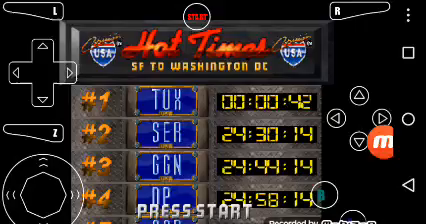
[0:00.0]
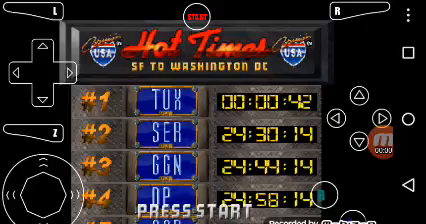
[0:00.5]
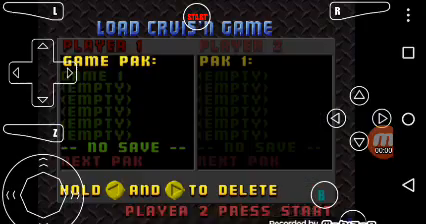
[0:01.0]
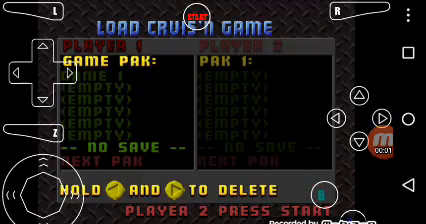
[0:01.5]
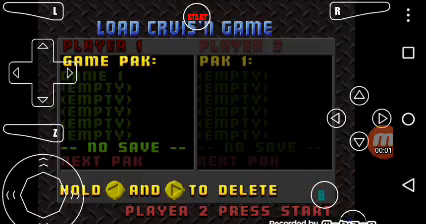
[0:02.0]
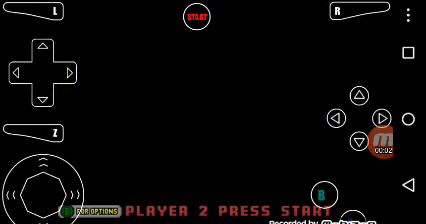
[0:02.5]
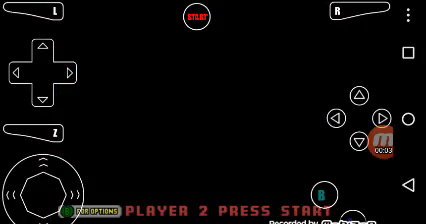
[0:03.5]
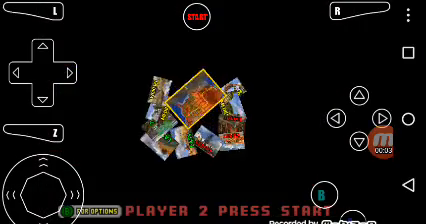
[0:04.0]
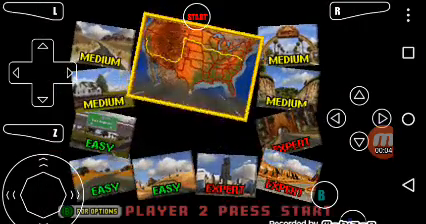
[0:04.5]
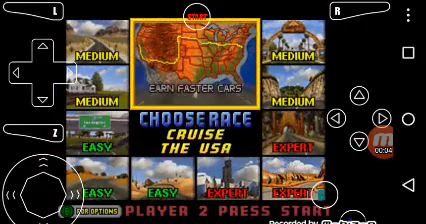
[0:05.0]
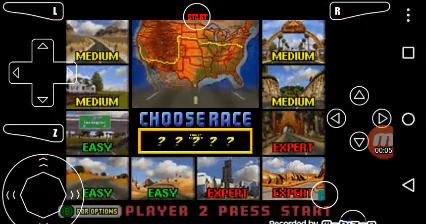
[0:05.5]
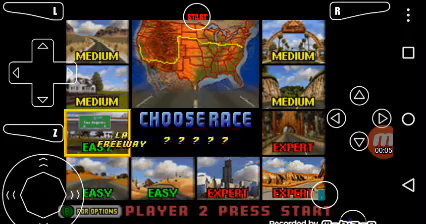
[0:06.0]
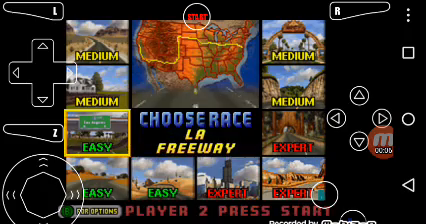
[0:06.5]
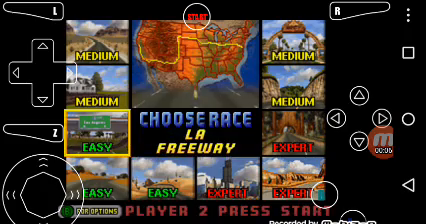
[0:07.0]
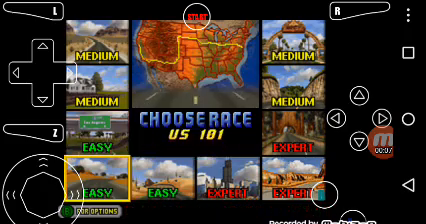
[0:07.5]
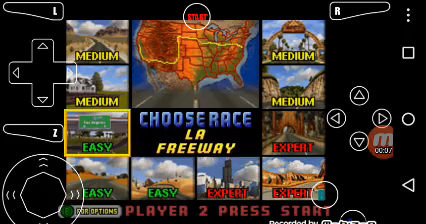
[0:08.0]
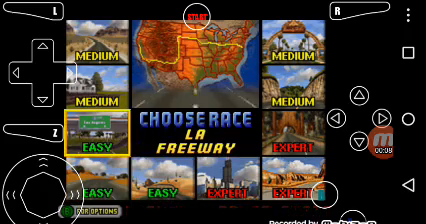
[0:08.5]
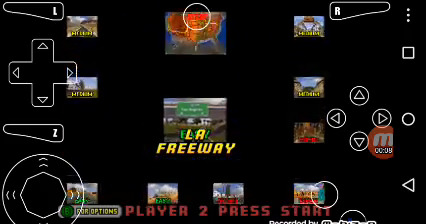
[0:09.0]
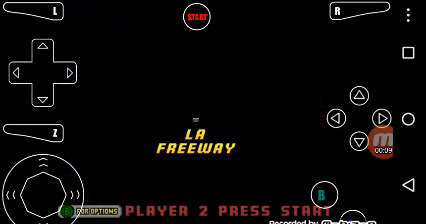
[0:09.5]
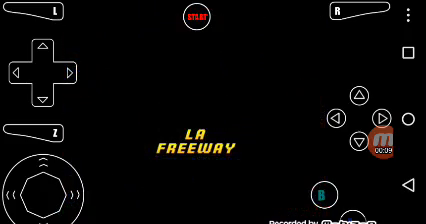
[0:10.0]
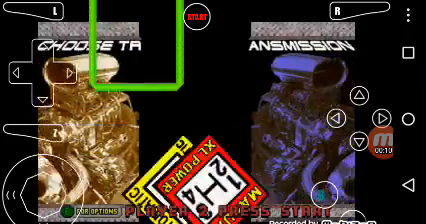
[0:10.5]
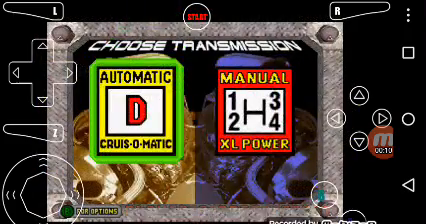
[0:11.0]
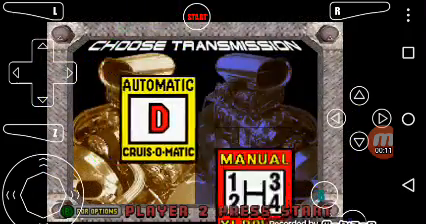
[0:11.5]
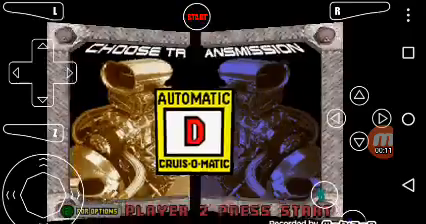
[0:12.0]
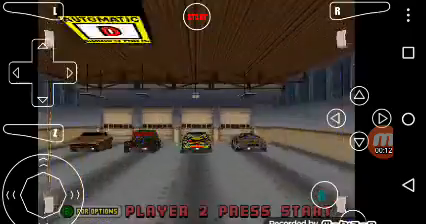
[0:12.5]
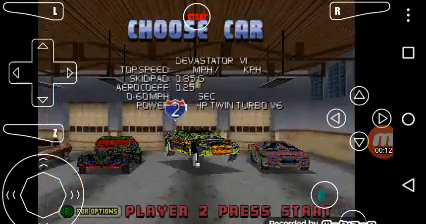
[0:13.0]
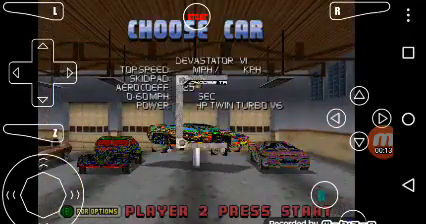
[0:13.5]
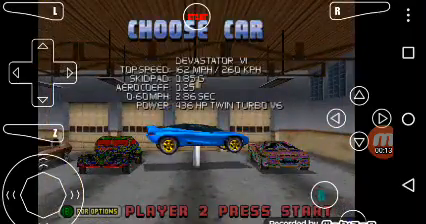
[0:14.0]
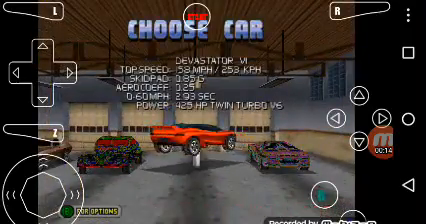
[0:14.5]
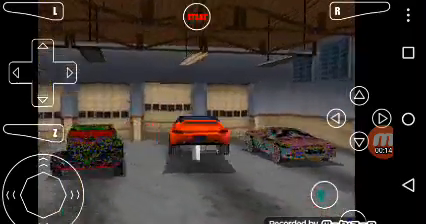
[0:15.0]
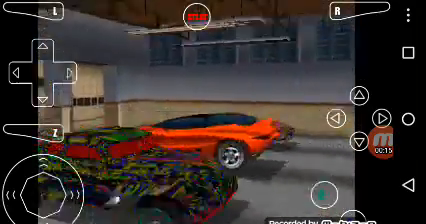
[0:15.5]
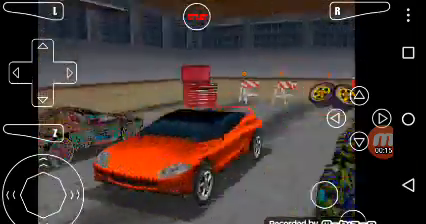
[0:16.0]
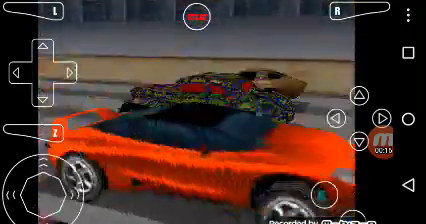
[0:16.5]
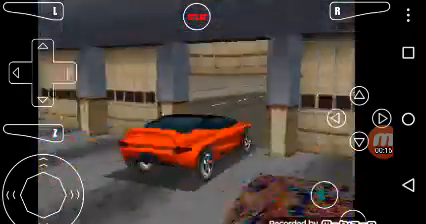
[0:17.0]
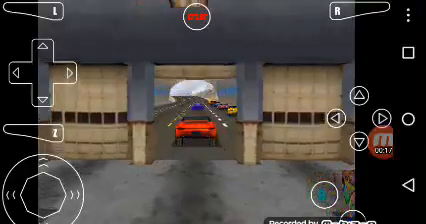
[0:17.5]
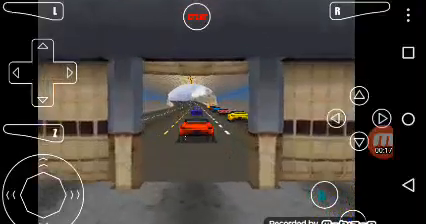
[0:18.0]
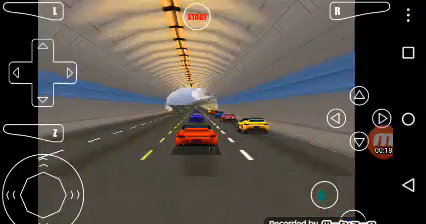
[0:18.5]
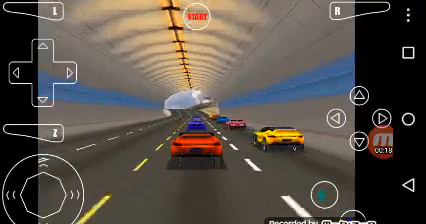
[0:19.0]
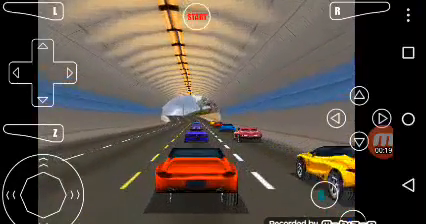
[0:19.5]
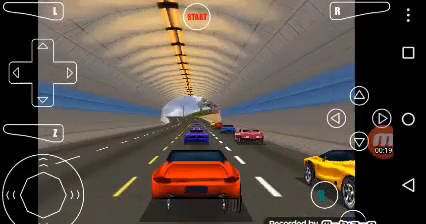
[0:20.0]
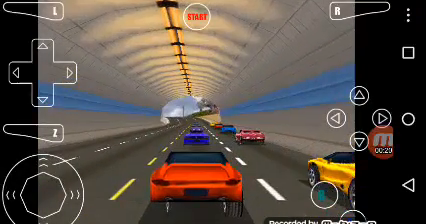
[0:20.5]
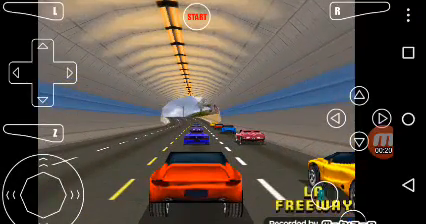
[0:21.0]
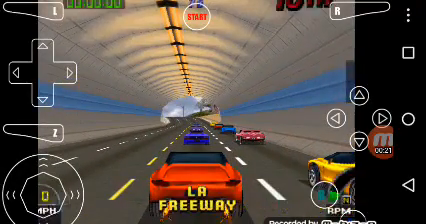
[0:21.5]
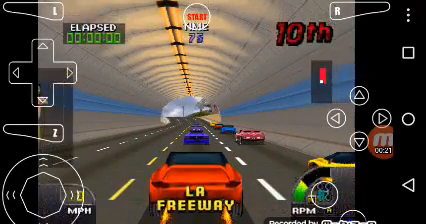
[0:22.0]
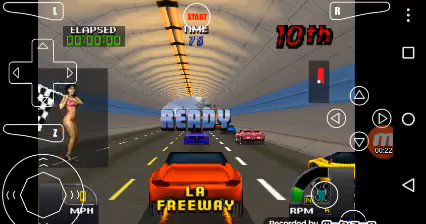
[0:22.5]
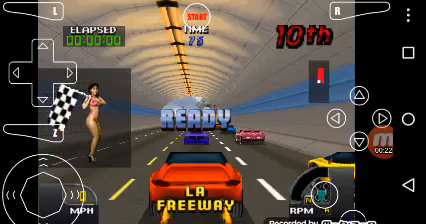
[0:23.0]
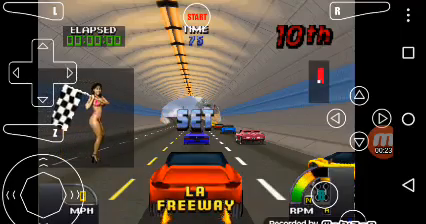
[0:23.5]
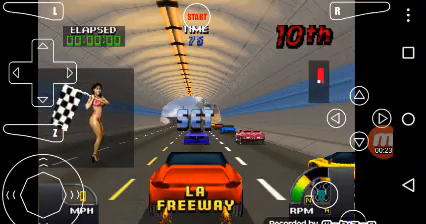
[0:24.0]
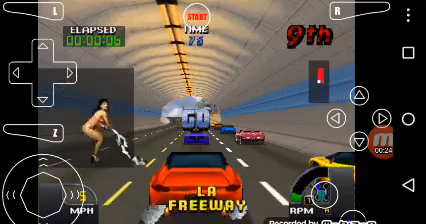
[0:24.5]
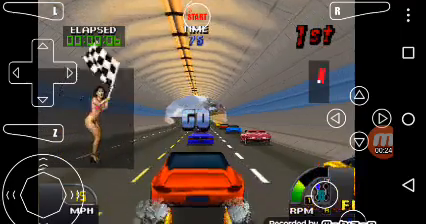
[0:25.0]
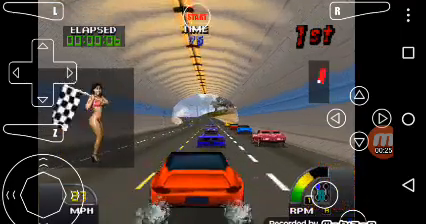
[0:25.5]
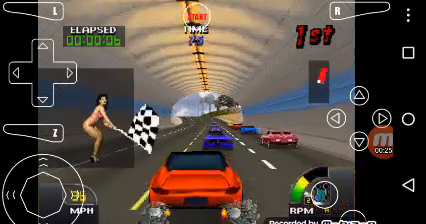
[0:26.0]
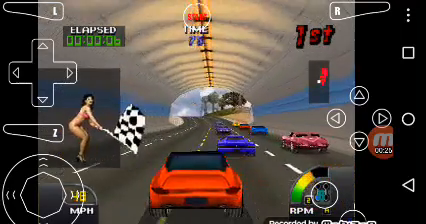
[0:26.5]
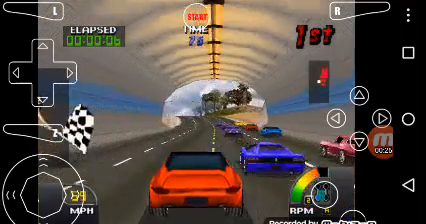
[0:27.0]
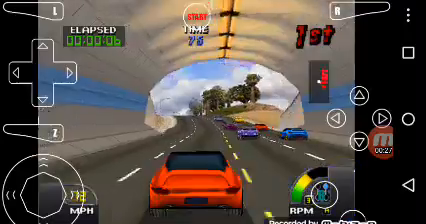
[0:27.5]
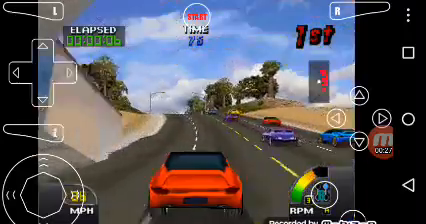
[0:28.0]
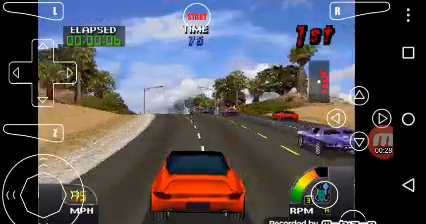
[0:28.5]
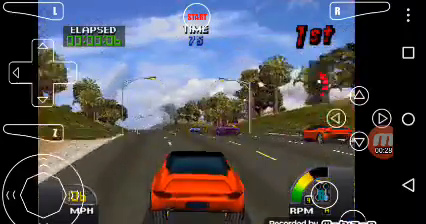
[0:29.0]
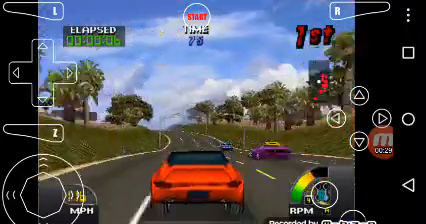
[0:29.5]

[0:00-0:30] The video has a video game look to it. At the upper left is what looks like a ping pong toggle with the letter L in it, apparently a gaming controller button. The upper right has a similar ping pong-like toggle that looks like an R, seemingly indicating the right toggle button on a game controller. Below that, on the middle right, are the up, left, right and down buttons, and below those is a button that looks like a triangle. In the center is what looks like a scoreboard showing numbers 1, 2, 3 and 4, with the initials of each player and the time on the right side of the scoreboard.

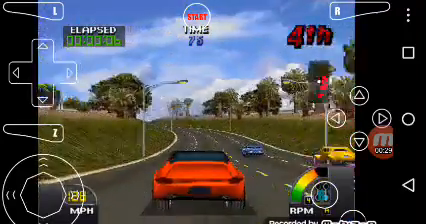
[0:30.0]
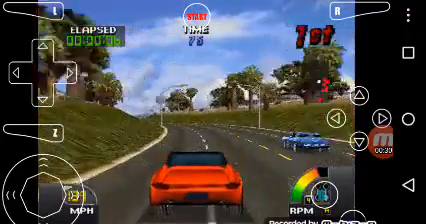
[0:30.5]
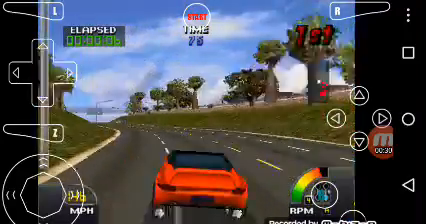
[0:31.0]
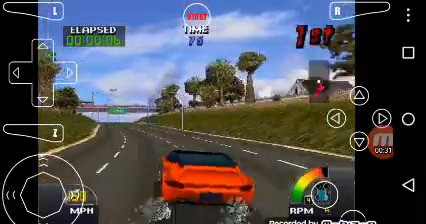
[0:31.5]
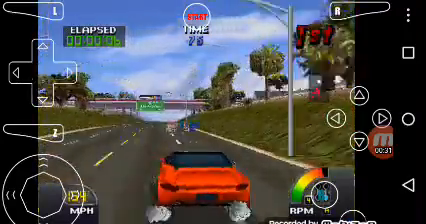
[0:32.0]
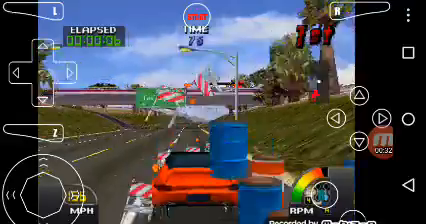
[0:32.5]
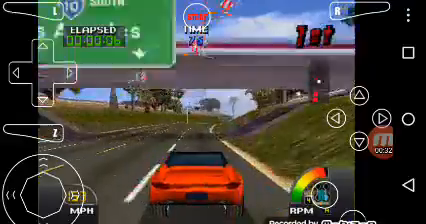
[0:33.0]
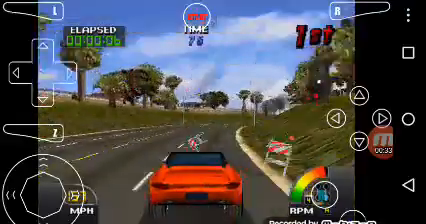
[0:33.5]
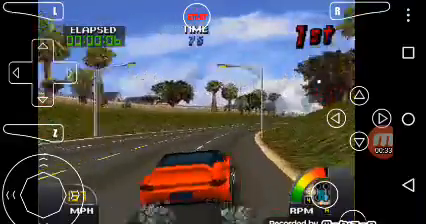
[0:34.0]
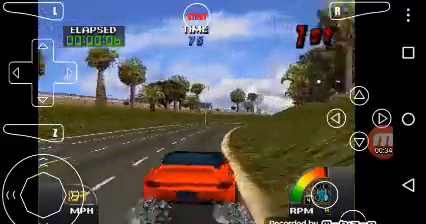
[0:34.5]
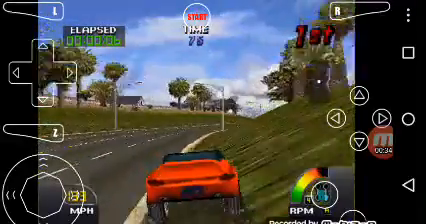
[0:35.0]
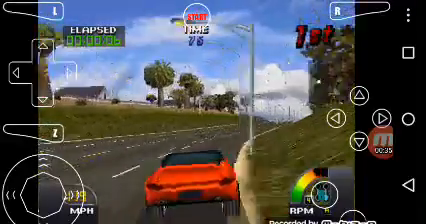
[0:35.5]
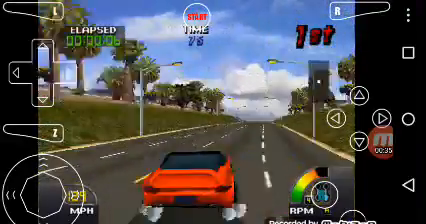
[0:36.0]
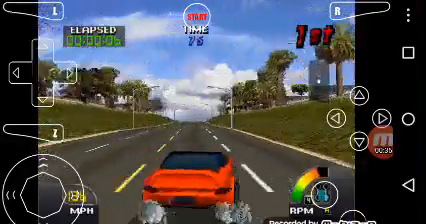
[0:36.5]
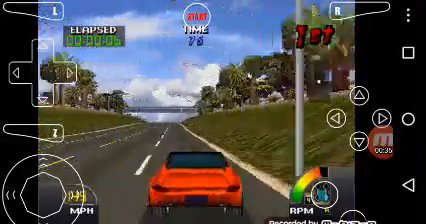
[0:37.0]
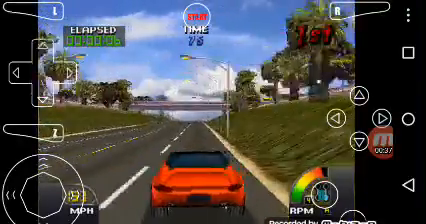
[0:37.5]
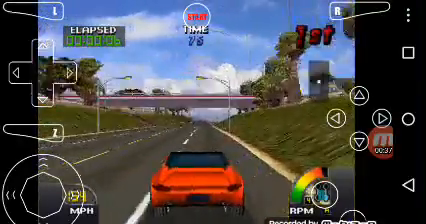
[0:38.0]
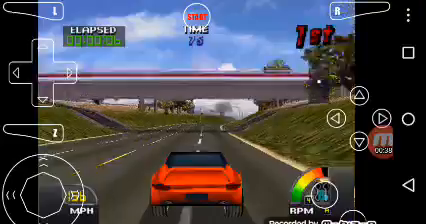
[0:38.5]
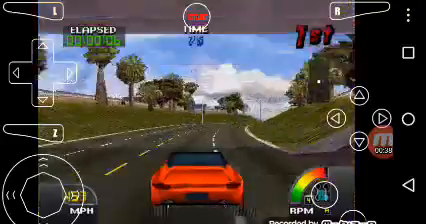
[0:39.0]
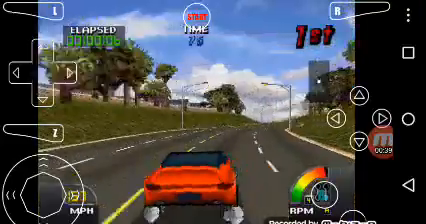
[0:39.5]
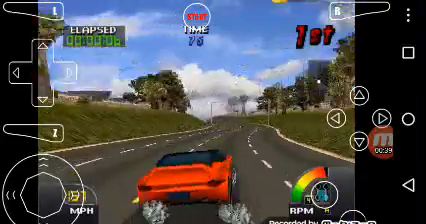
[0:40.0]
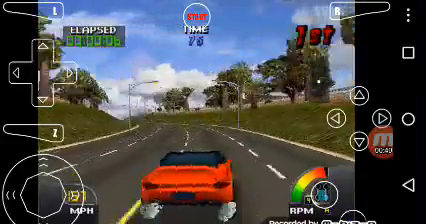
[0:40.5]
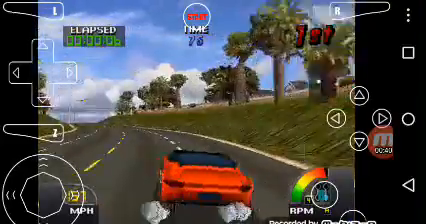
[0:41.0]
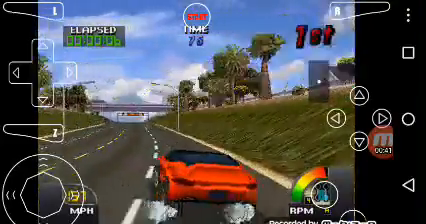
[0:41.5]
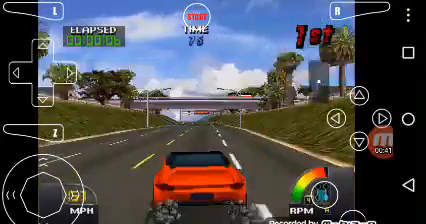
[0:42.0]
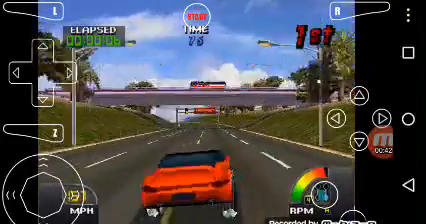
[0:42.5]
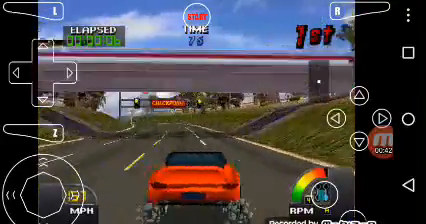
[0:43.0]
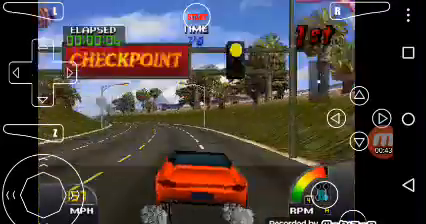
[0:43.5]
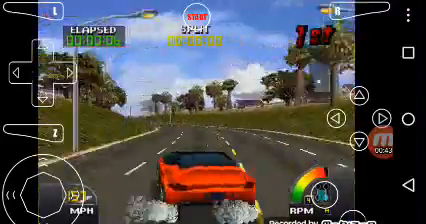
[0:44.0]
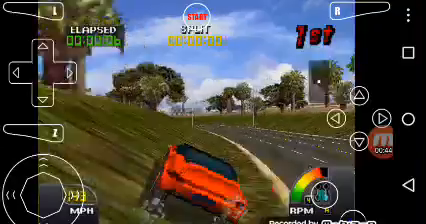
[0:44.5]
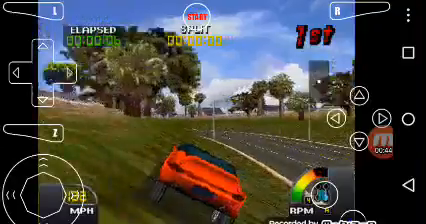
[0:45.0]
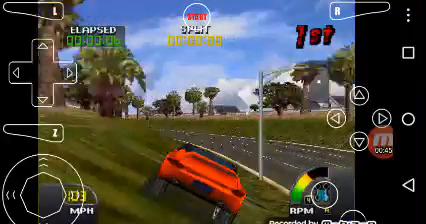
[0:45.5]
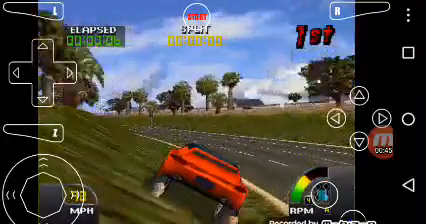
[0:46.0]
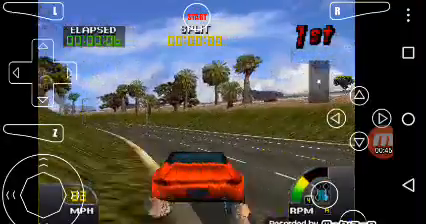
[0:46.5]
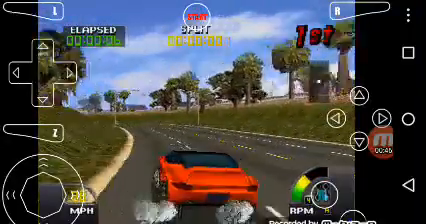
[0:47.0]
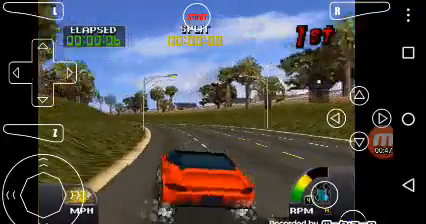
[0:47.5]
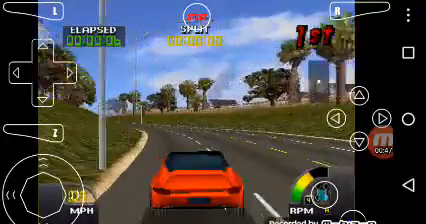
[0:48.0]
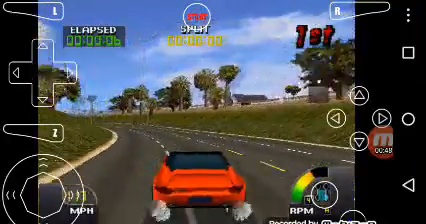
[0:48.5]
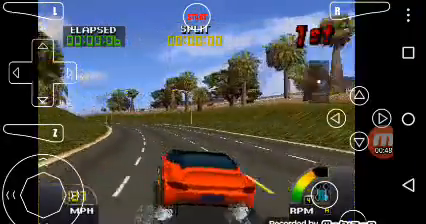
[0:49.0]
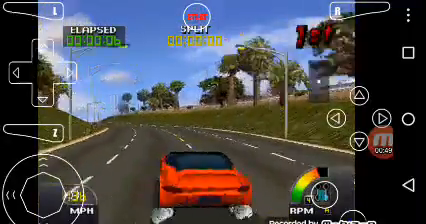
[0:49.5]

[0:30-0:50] A video game shows a car on a road that looks like a highway. The car is in the center of the image and is red with a black top. At the upper left is what looks like the time, with the word "elapsed". At the start, the car passes a blue car on the right. The sky is in the background, and there is grass on the left and right sides of the road. At the upper right, the car's place reads "first" in red lettering with a black outline. As the video progresses, the car goes onto the grass, then corrects itself and gets back on the road. Road lights and highway signs appear along the way.